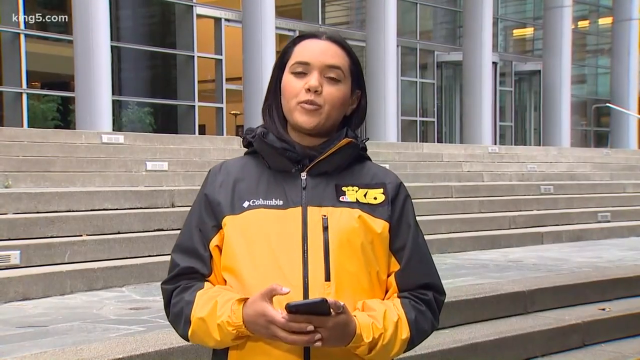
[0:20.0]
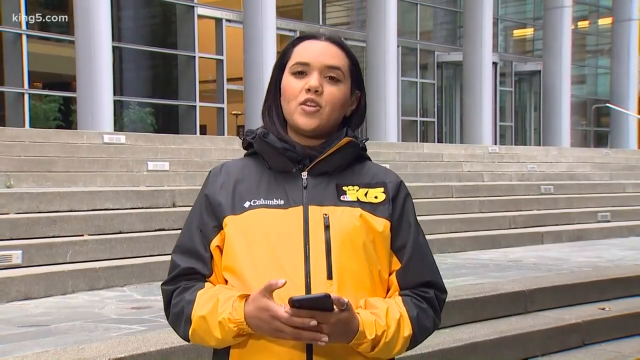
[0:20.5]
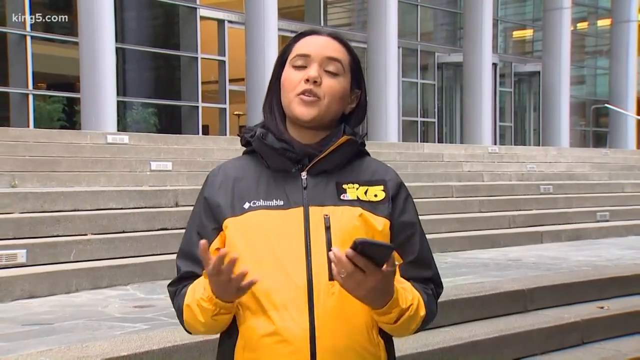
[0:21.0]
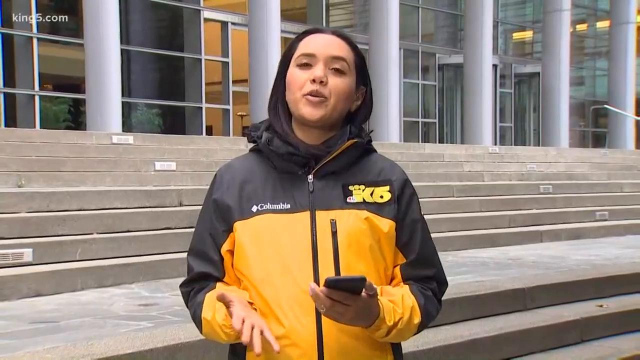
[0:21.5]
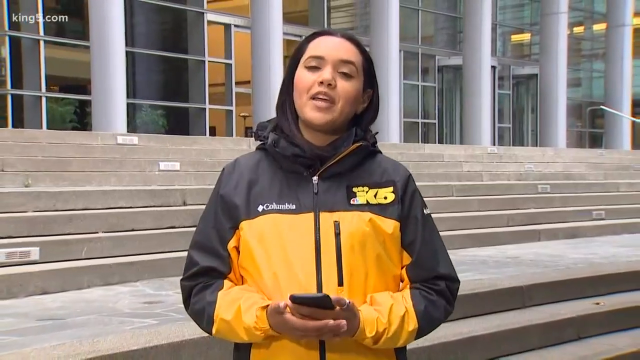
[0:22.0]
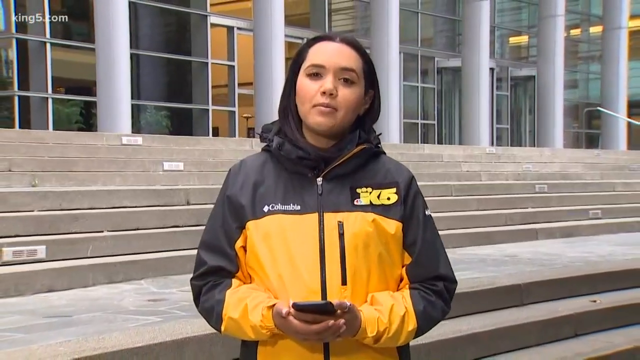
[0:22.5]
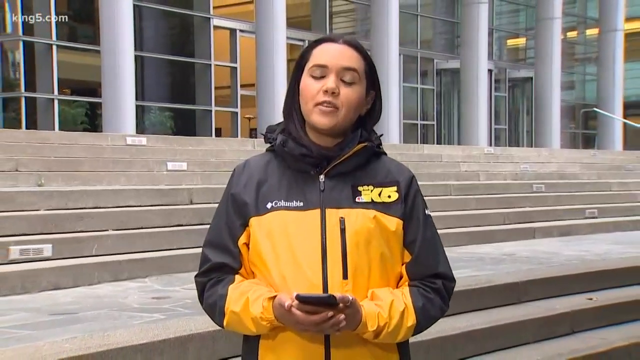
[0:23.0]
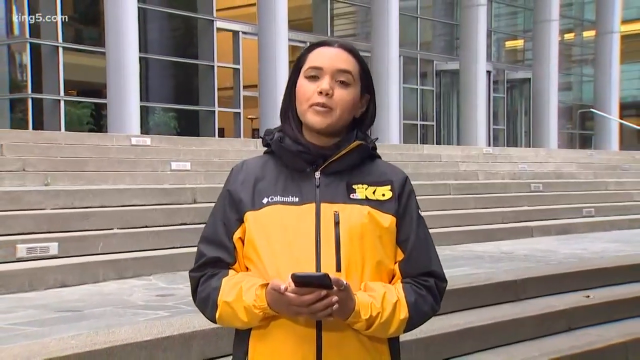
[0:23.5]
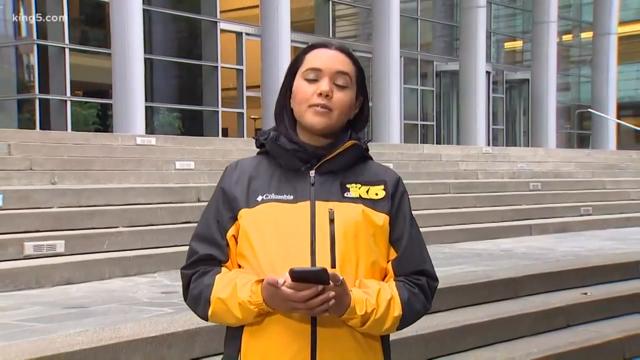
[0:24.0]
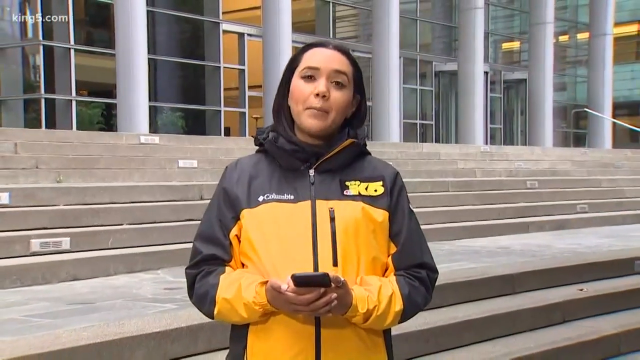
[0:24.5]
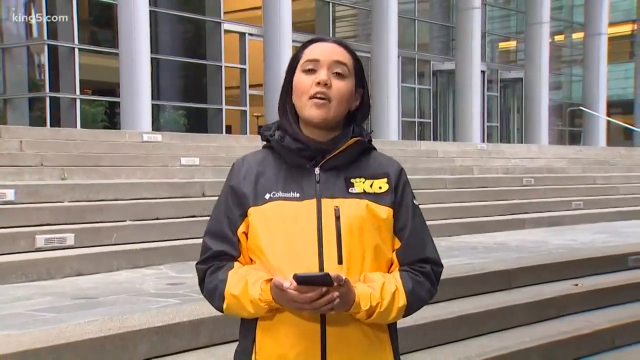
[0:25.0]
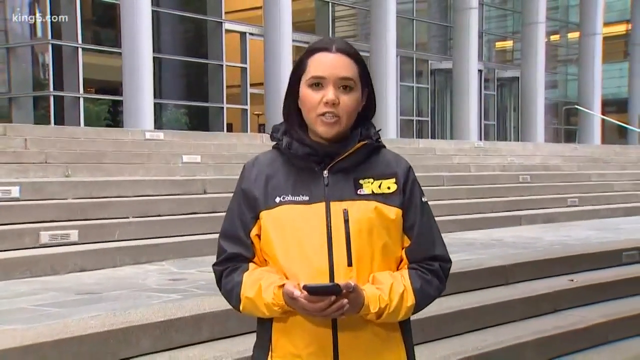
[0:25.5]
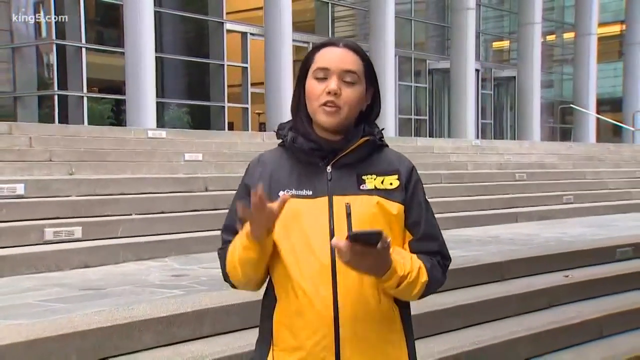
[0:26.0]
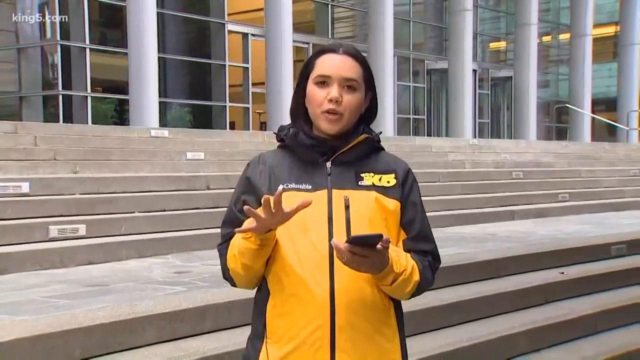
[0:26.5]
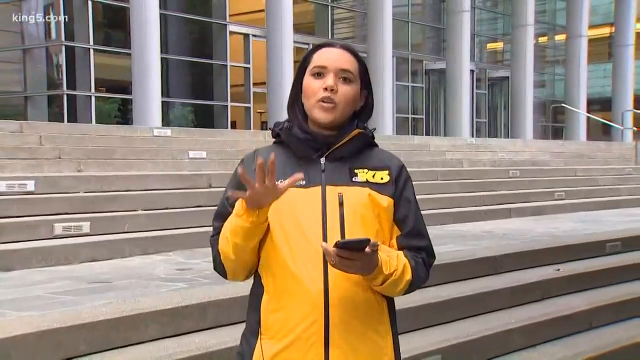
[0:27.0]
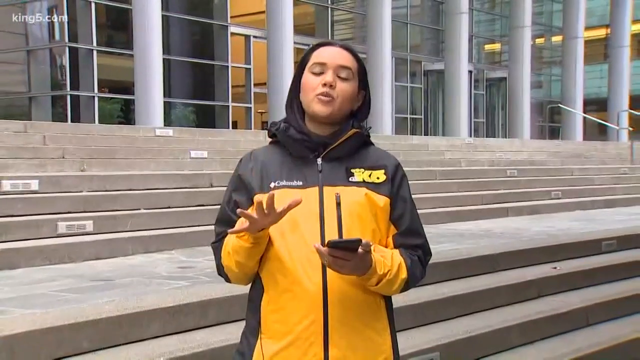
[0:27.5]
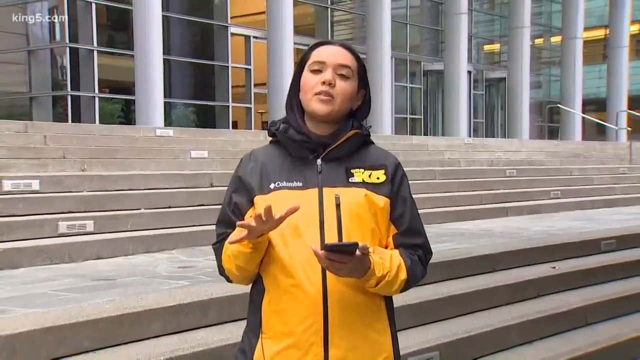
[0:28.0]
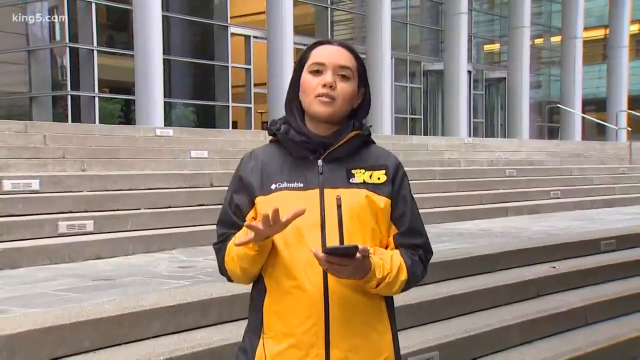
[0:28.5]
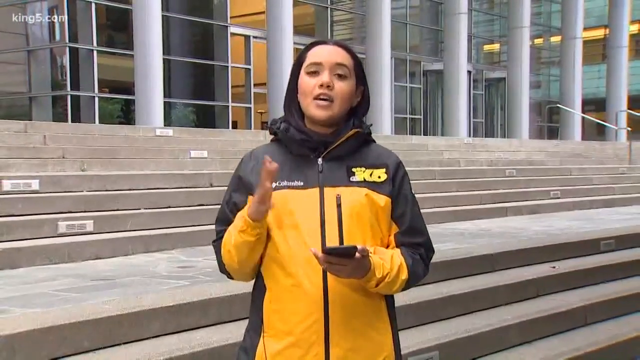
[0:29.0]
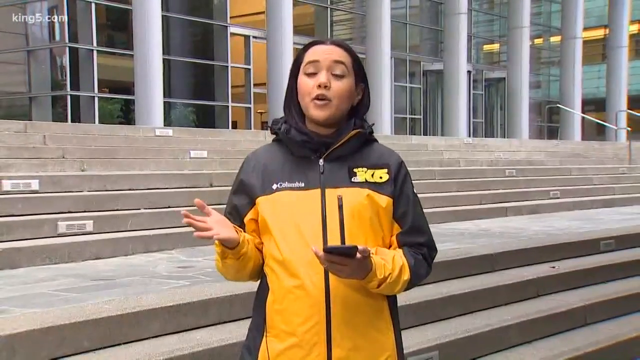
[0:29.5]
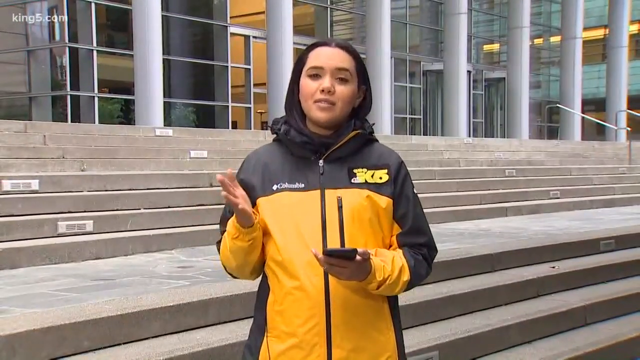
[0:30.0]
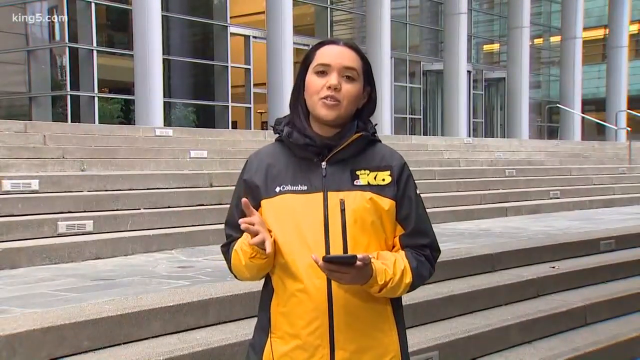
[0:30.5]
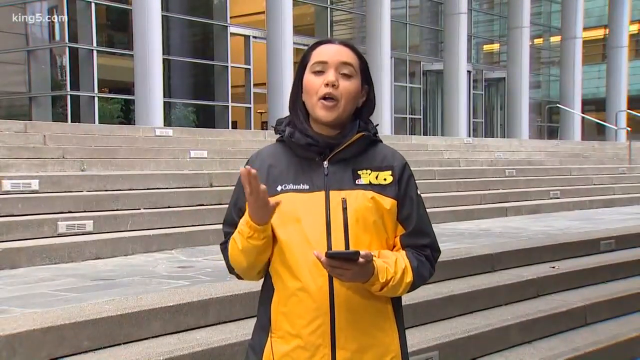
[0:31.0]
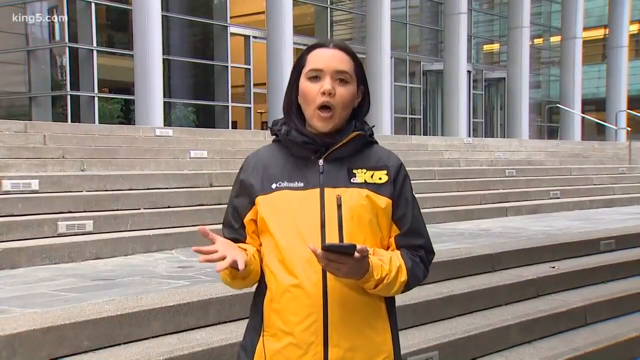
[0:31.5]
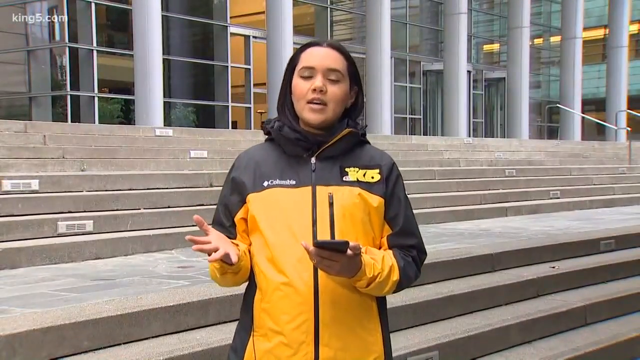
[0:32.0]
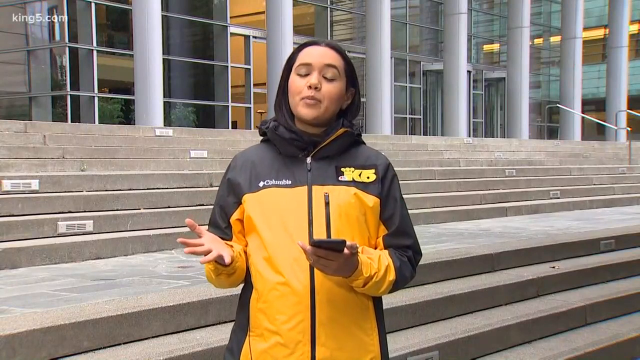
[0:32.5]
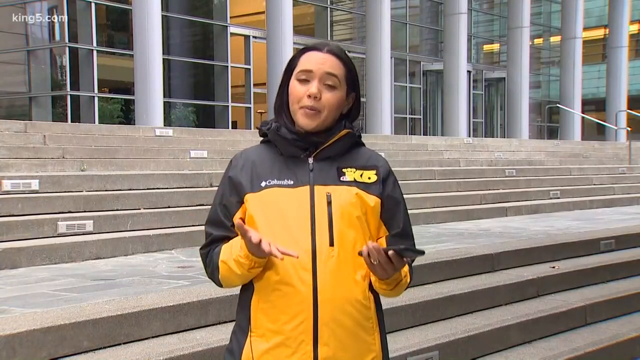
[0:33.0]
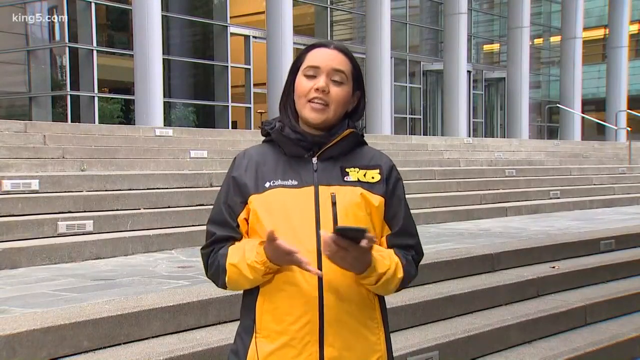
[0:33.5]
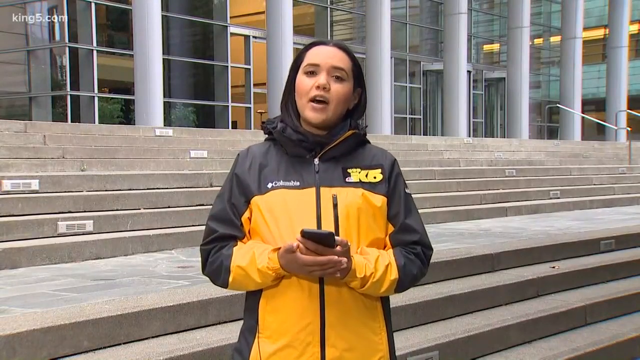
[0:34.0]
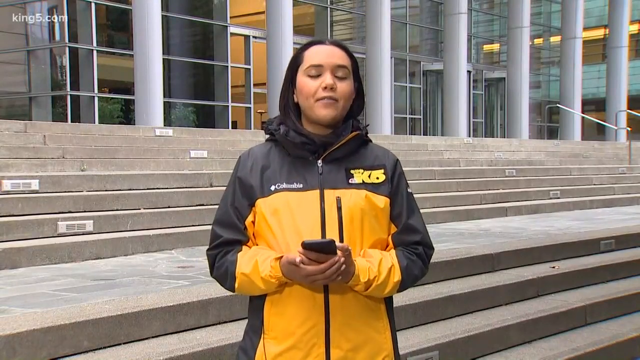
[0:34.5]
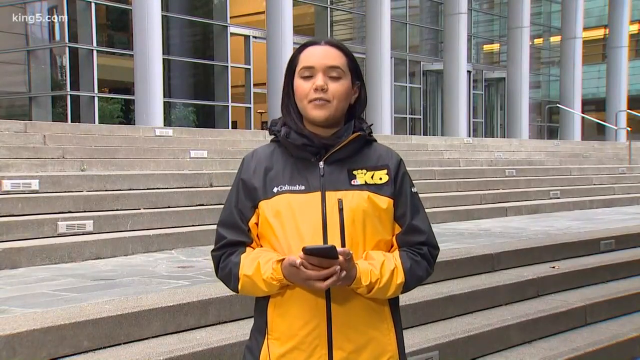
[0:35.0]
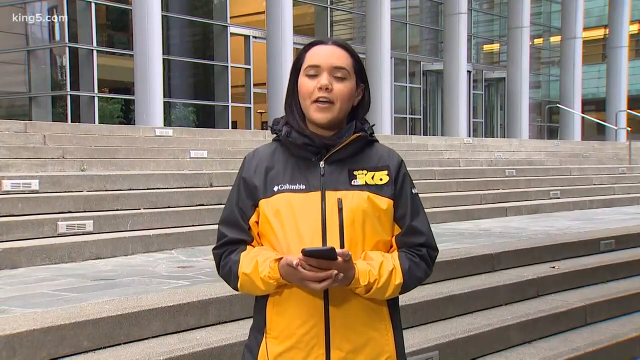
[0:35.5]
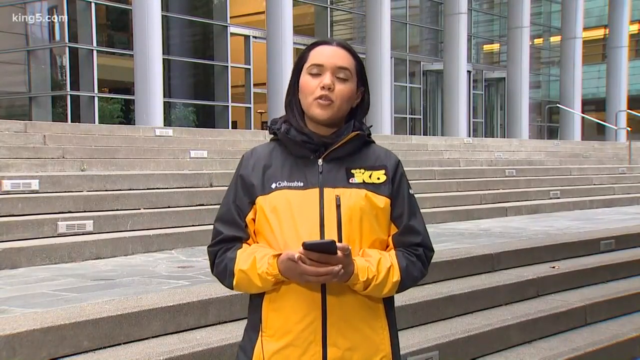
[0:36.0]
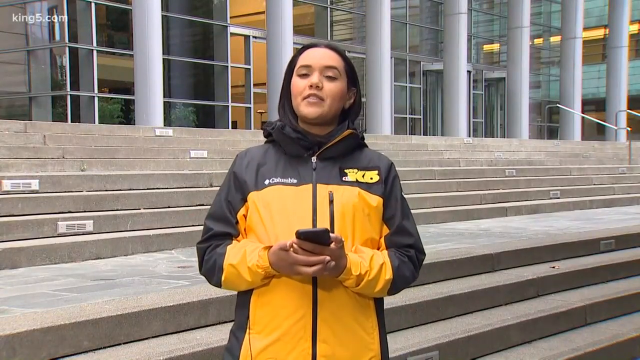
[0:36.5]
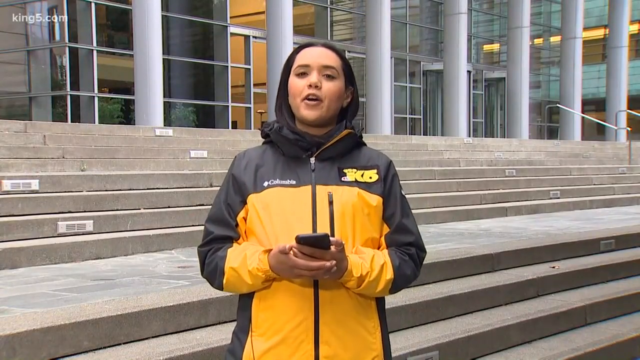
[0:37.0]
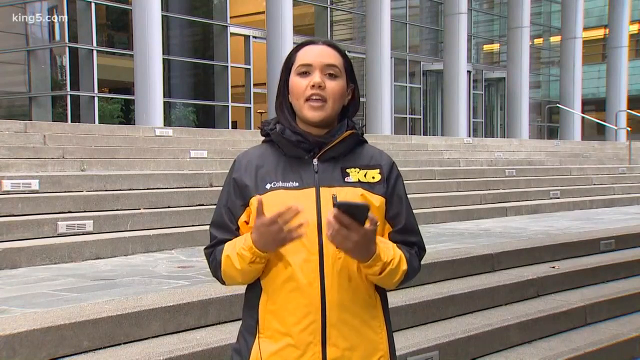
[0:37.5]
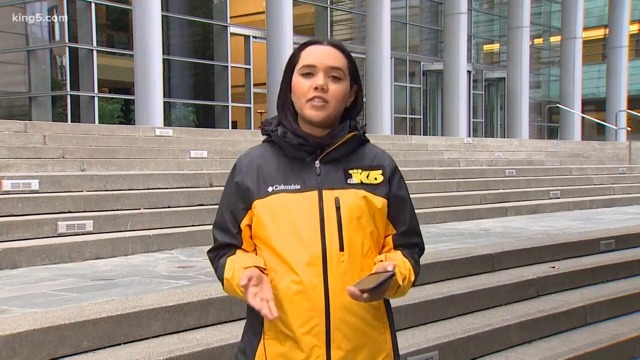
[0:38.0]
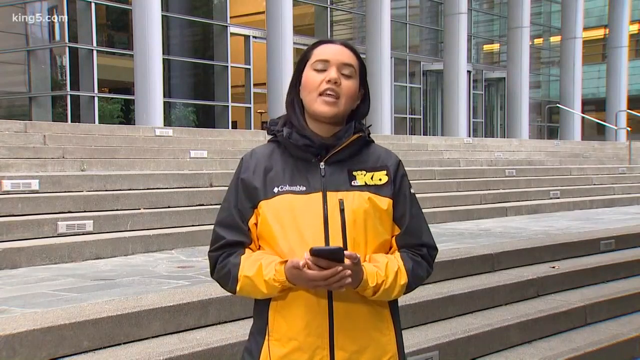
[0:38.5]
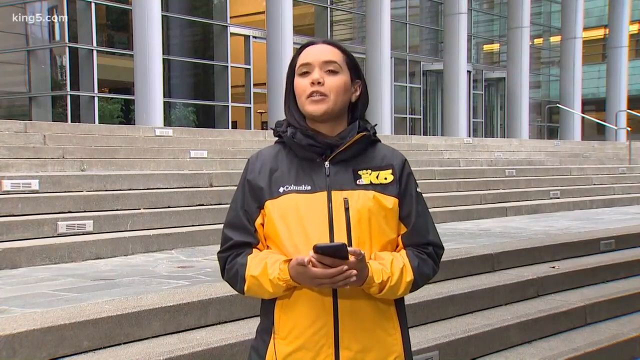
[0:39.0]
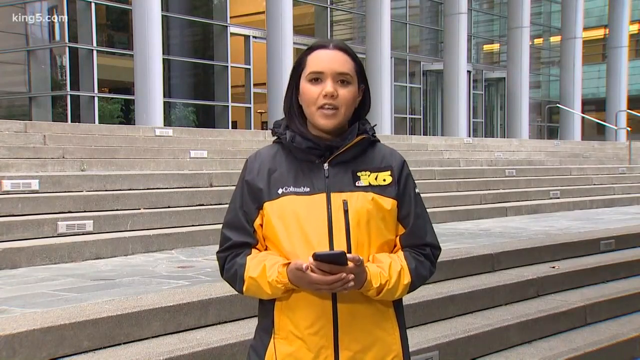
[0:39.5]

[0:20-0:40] A TV reporter on site appears on screen. She has light brown skin, medium-length black hair and brown eyes, and wears a yellow and black Columbia jacket with the K5 logo on it. Behind her are many grey stairs and a building with many windows. She holds a black phone in her left hand and seems to be moving her right hand while her mouth moves, apparently speaking. She faces the camera and continues the interview until the shot ends.